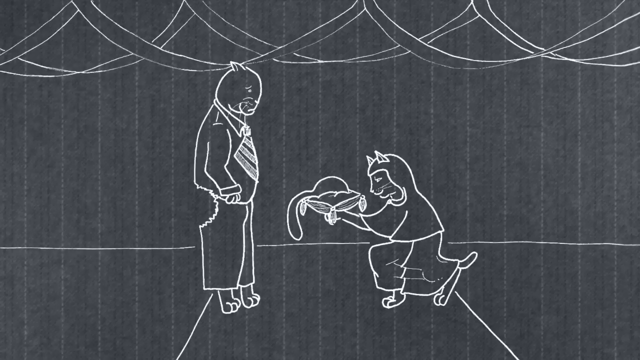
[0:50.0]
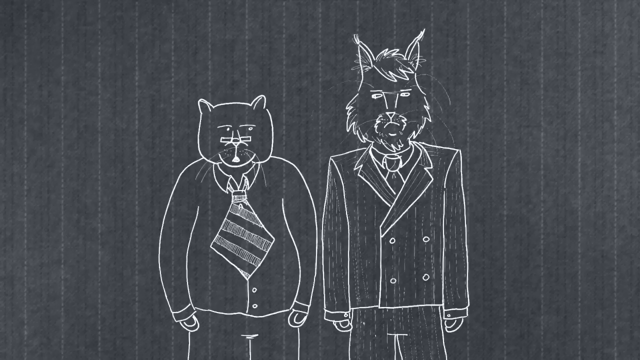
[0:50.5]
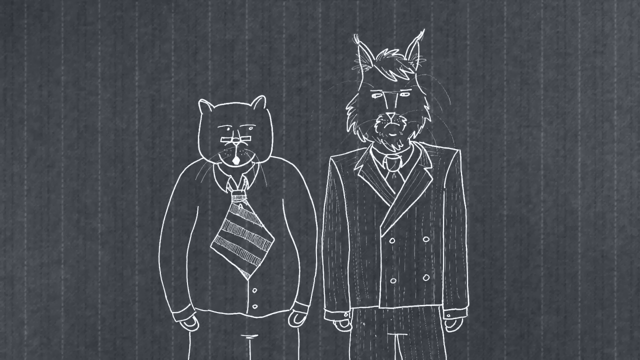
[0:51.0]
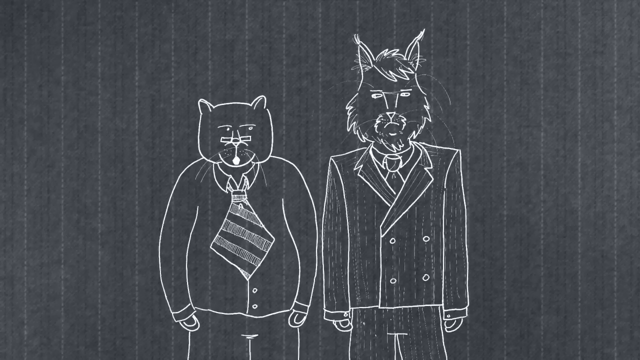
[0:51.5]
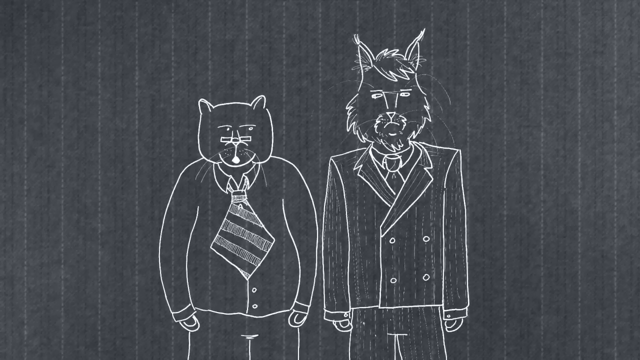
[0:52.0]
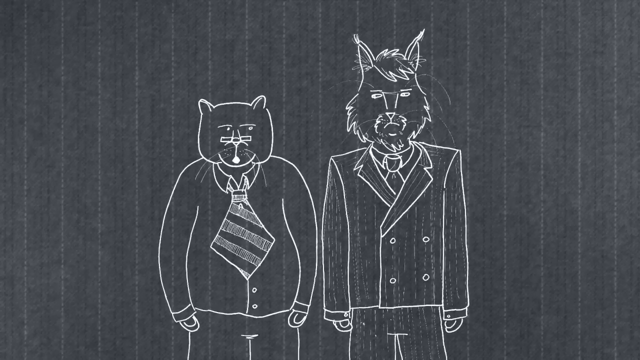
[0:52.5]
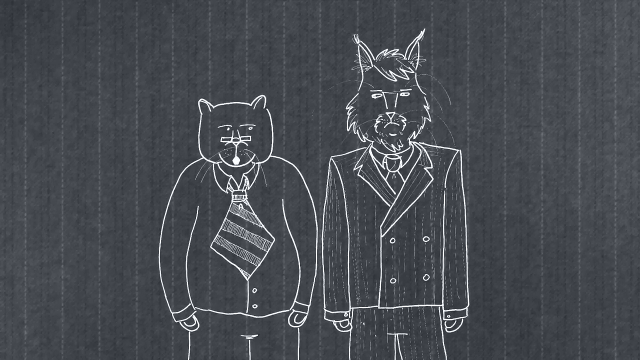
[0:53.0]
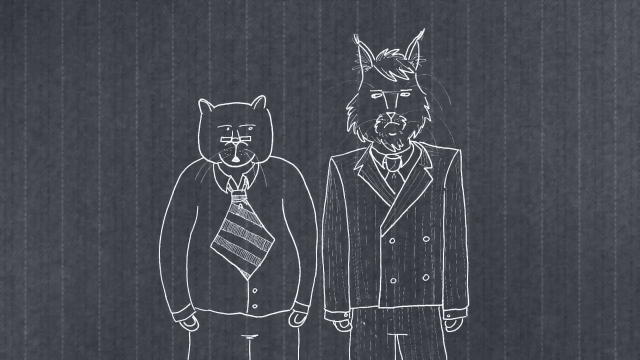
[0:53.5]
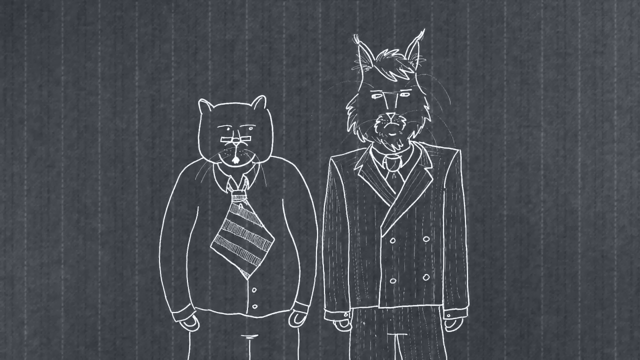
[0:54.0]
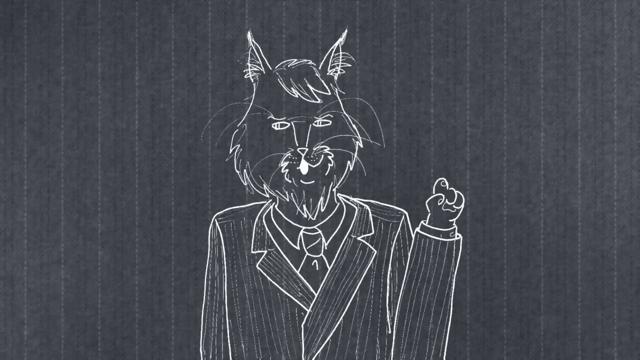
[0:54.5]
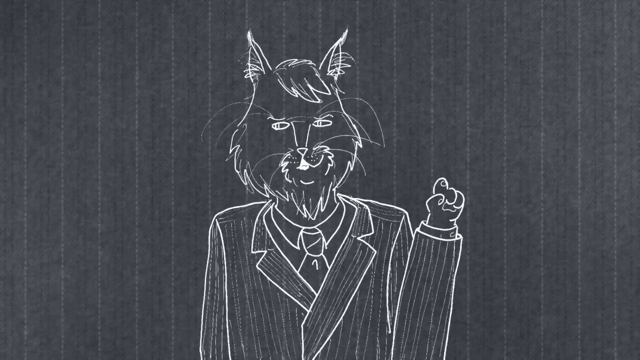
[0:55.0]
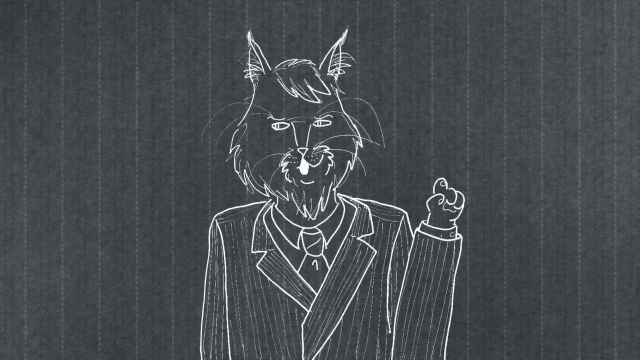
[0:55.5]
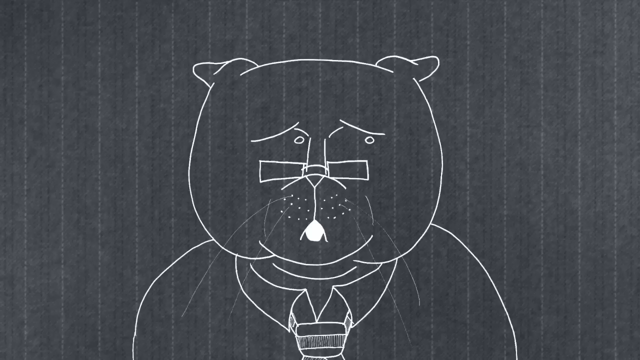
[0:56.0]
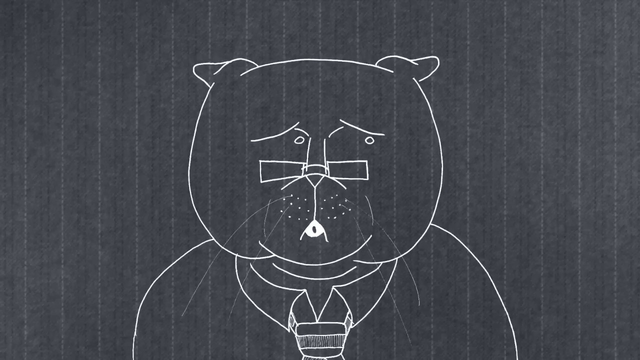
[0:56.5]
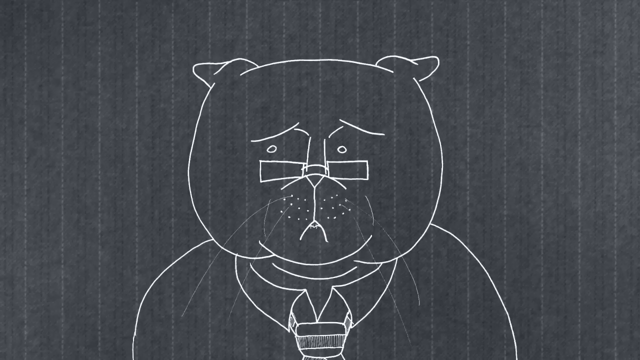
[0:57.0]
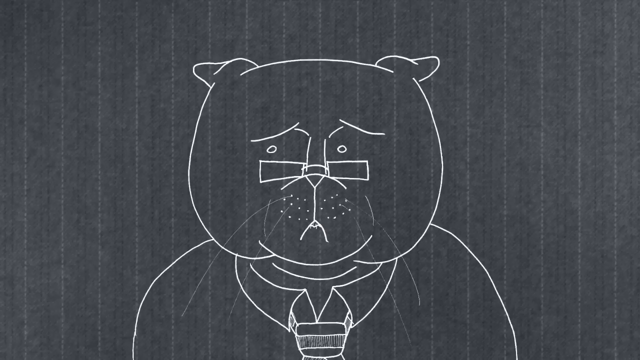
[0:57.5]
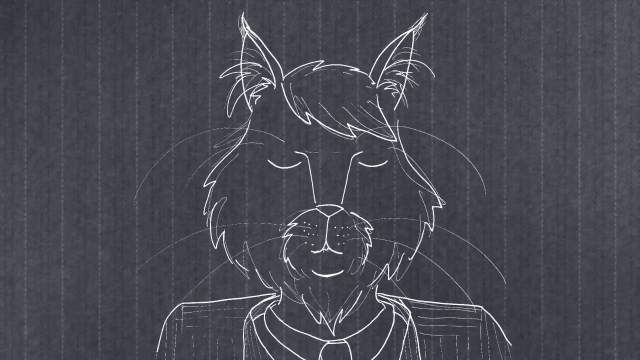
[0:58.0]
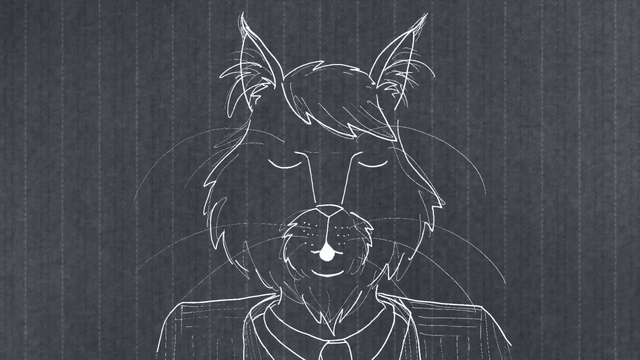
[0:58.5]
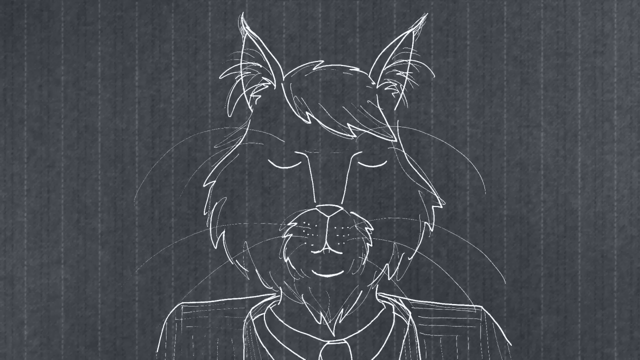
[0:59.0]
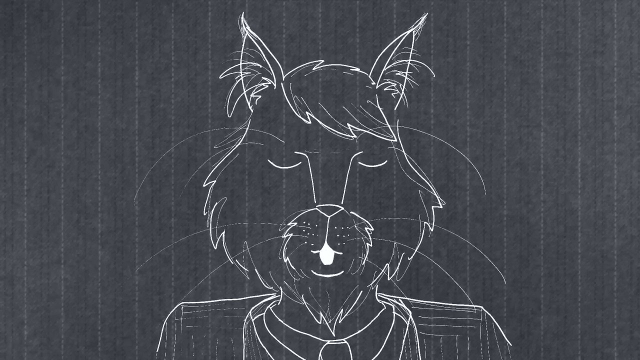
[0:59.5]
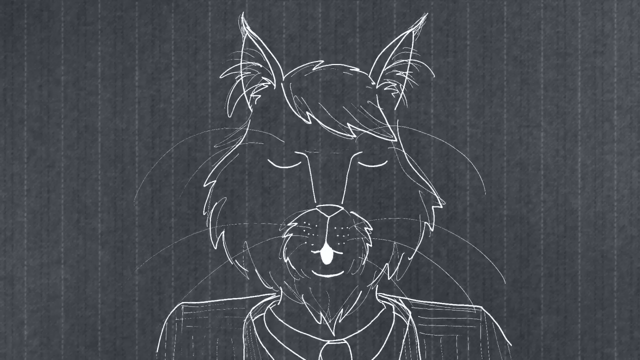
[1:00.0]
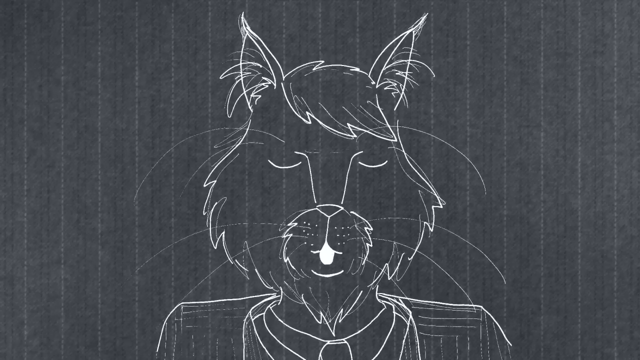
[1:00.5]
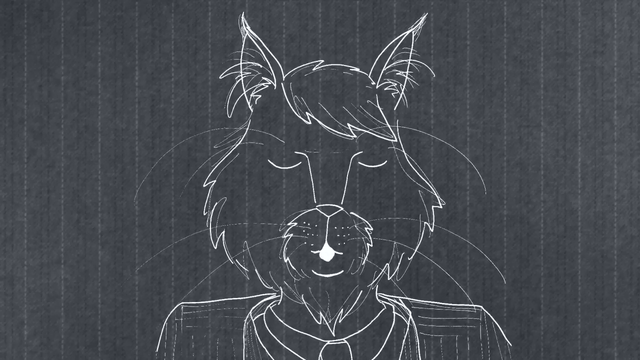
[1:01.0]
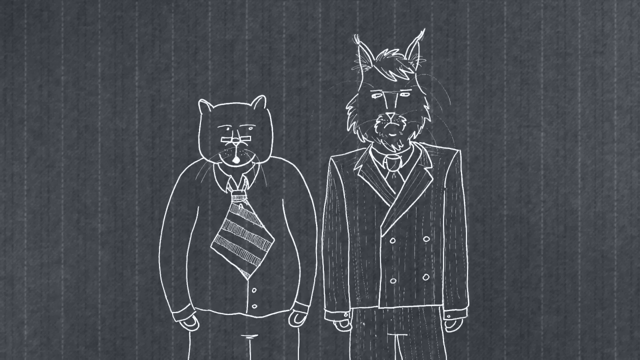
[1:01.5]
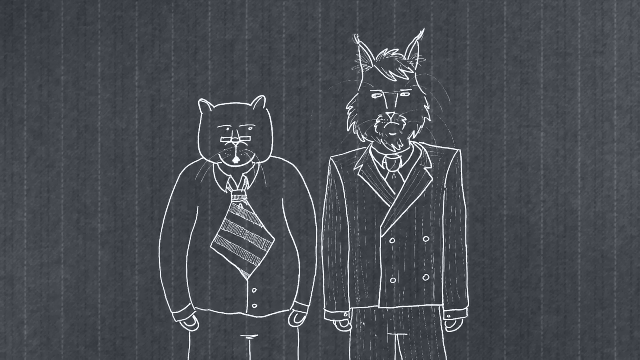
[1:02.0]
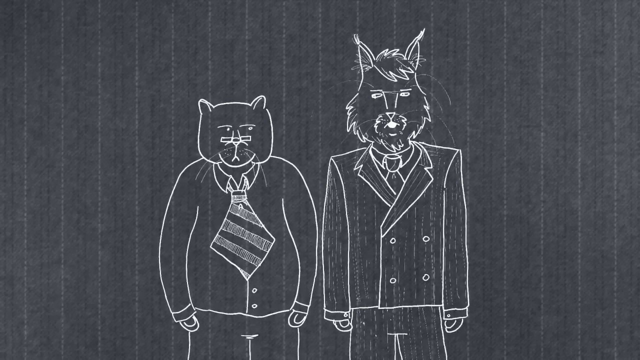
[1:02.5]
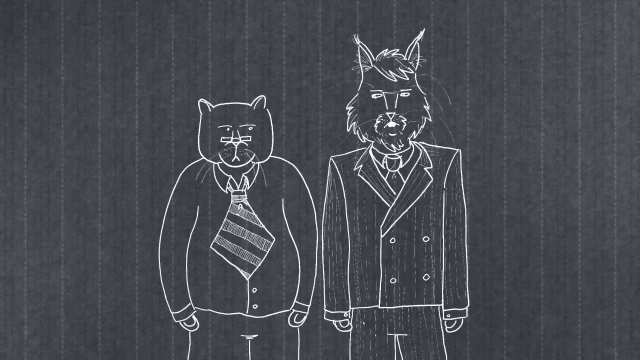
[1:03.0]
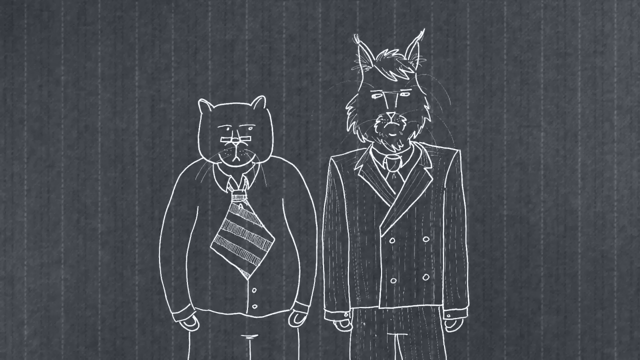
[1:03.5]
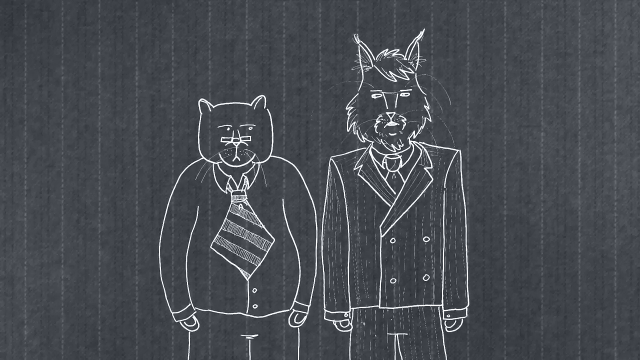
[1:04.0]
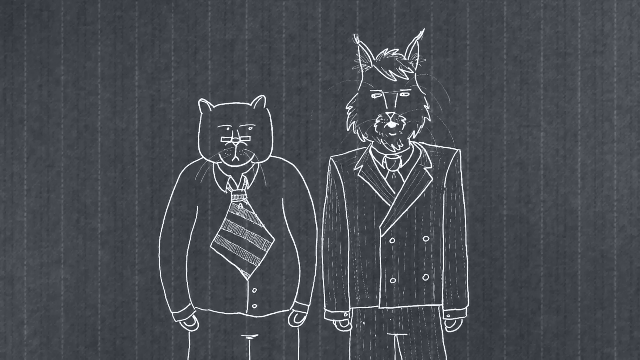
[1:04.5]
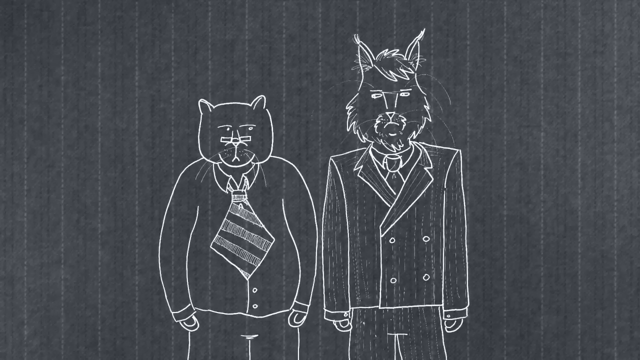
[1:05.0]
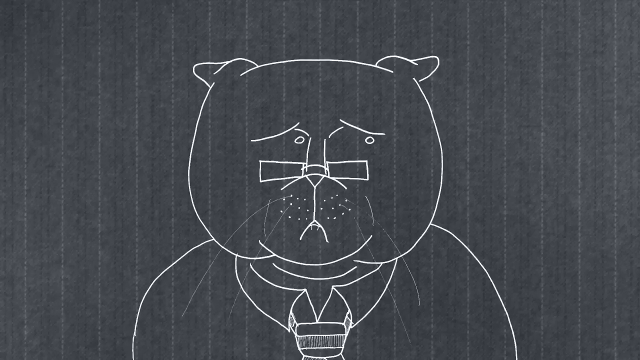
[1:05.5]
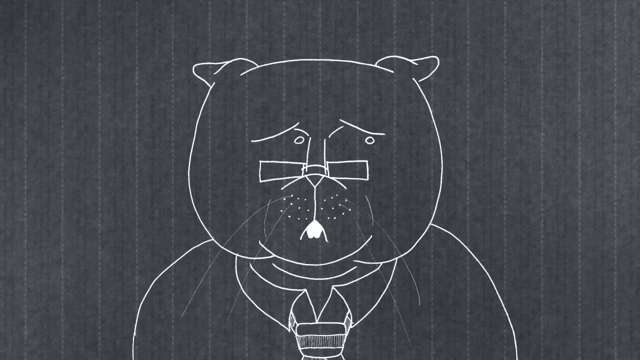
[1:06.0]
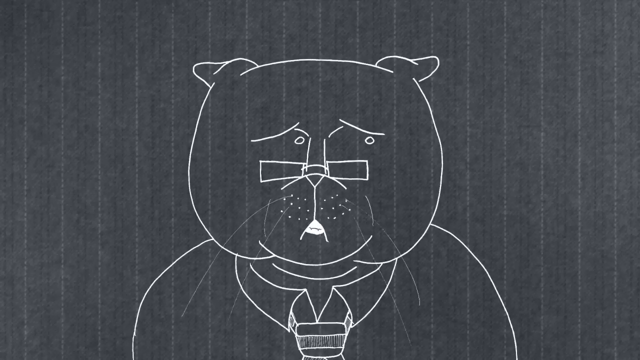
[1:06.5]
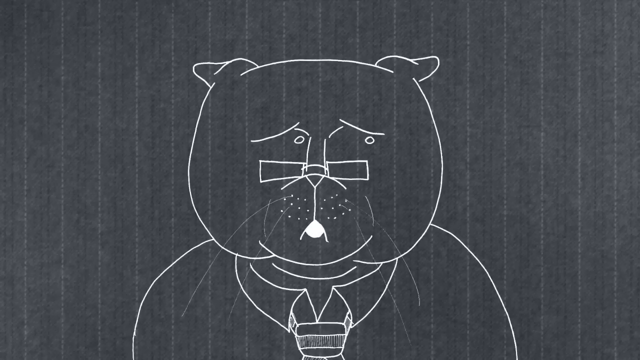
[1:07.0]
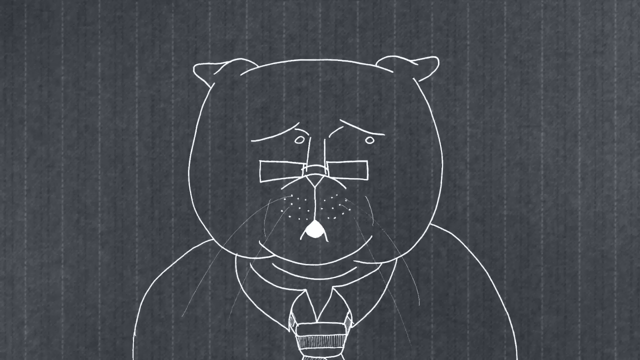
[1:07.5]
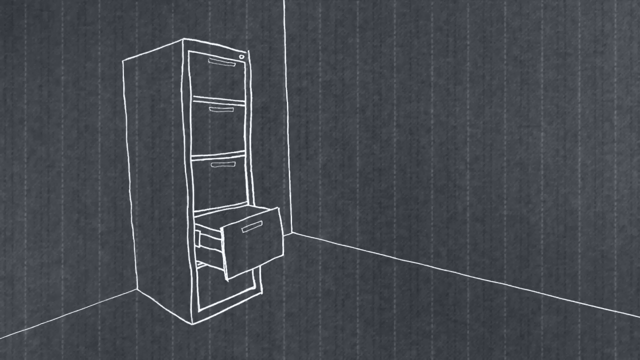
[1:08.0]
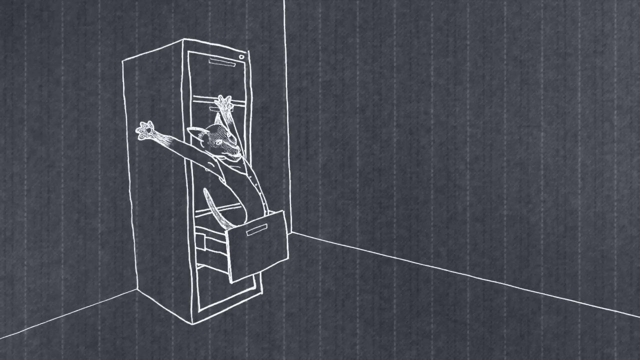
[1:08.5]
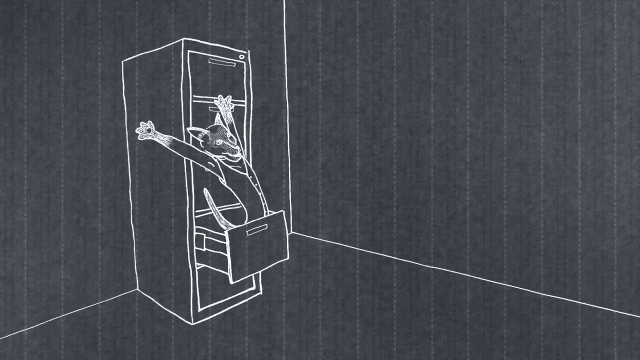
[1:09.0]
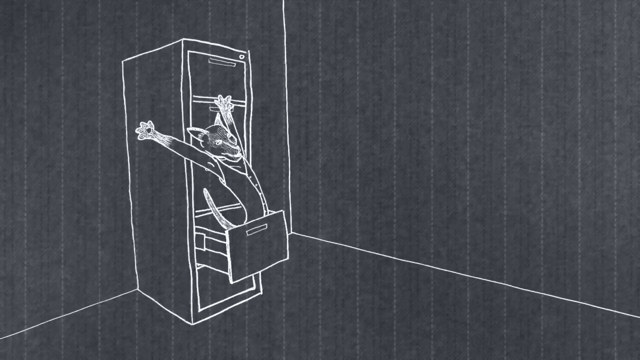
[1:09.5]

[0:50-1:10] A series of animated scenes is drawn in white lines against a grey backdrop whose texture almost looks like fabric. First, two anthropomorphic cats that look human and wear clothes are shown: one, in a robe and hood, kneels in front of the other and holds up a pillow with something on it that almost looks like a cat's tail. The standing cat wears pants, a shirt and a tie, and it looks like a chunk has been bitten out of its backside. A series of images then shows two cats in business clothes standing next to each other and talking. One is tall with pointy ears and wears a jacket with a tie underneath; the other is shorter, with a square face and short ears, and wears a very wide tie over a shirt. The shots go back and forth between their faces as they speak. Finally, a file cabinet stands in the corner of a room; a drawer opens and a cat pops out with its hands up over its head.